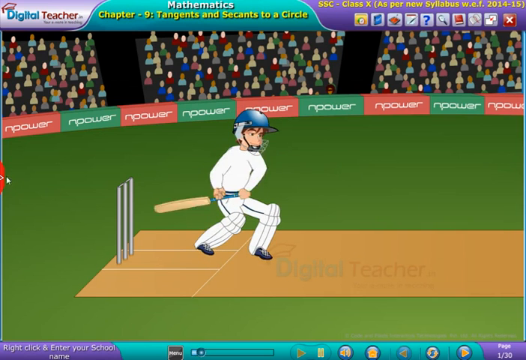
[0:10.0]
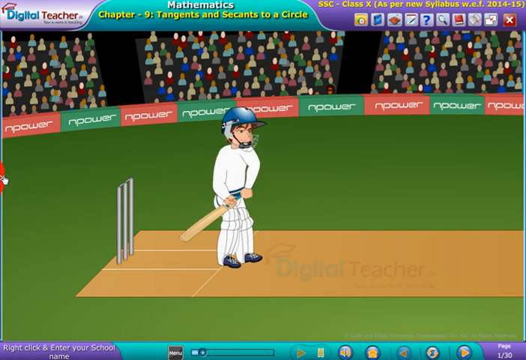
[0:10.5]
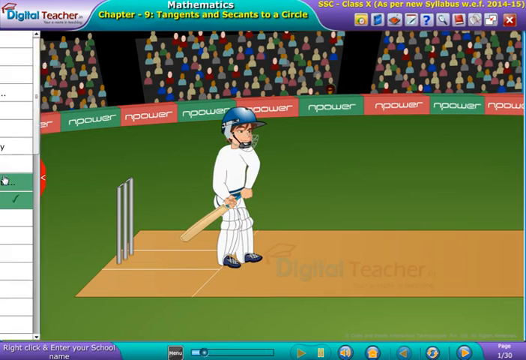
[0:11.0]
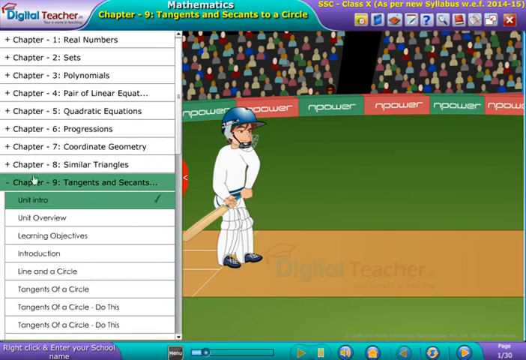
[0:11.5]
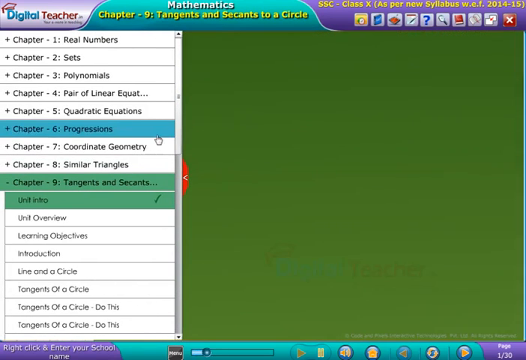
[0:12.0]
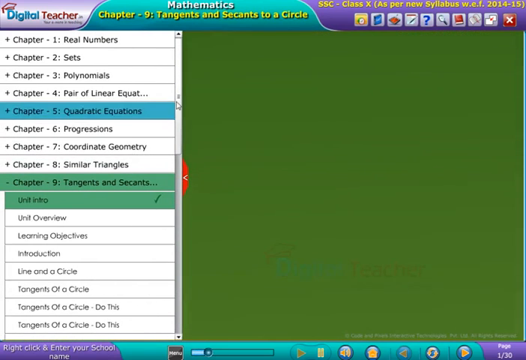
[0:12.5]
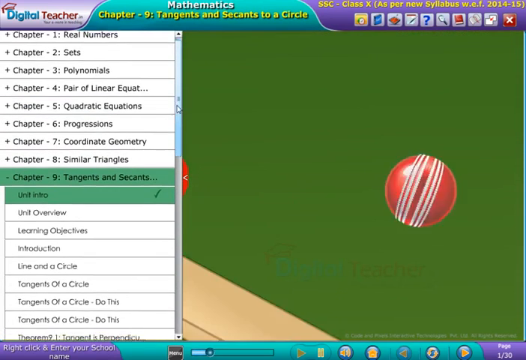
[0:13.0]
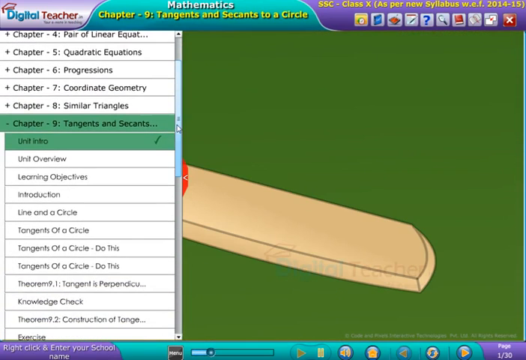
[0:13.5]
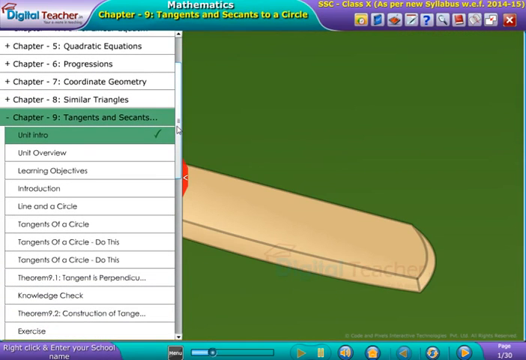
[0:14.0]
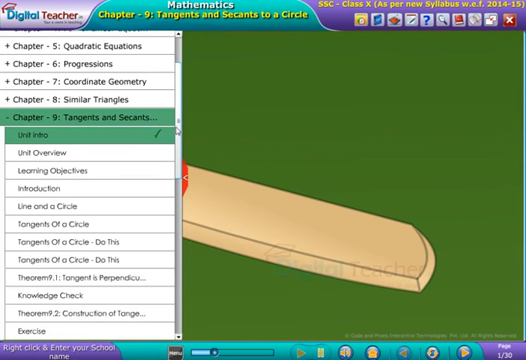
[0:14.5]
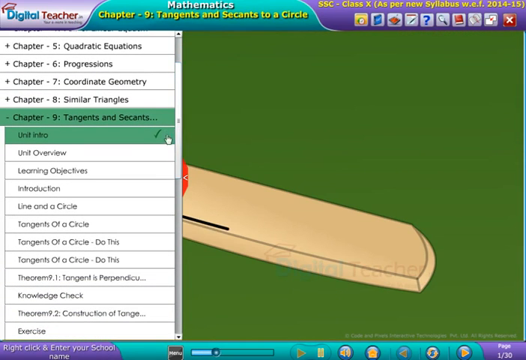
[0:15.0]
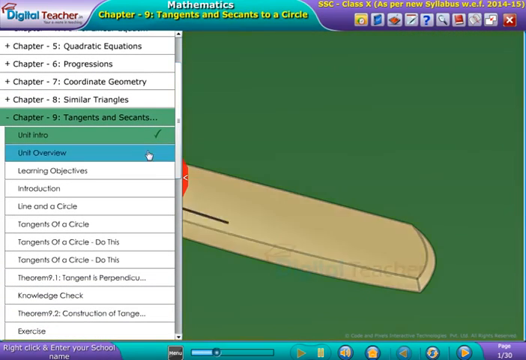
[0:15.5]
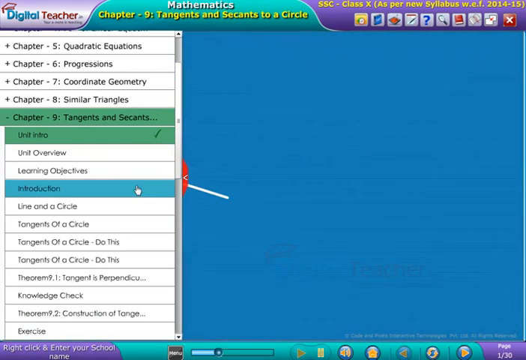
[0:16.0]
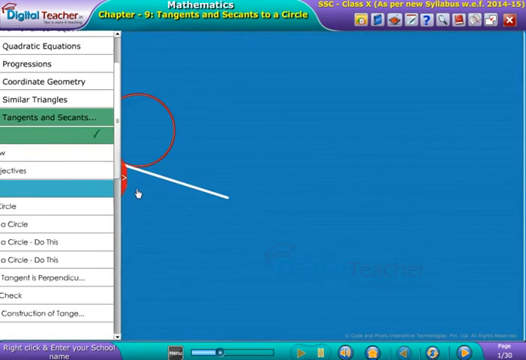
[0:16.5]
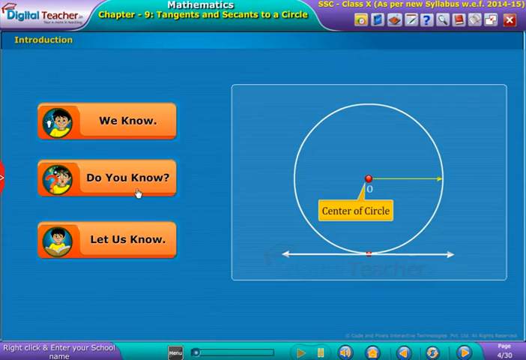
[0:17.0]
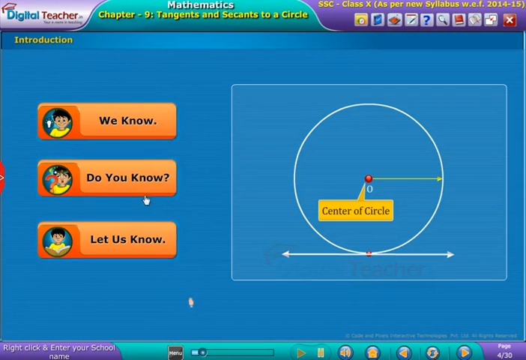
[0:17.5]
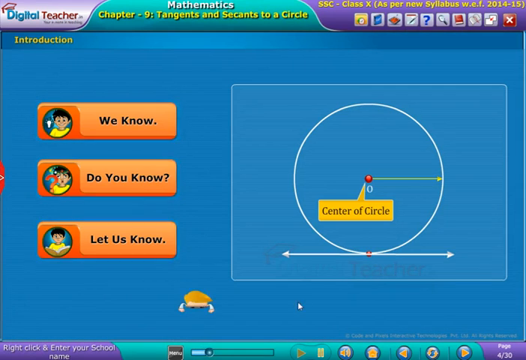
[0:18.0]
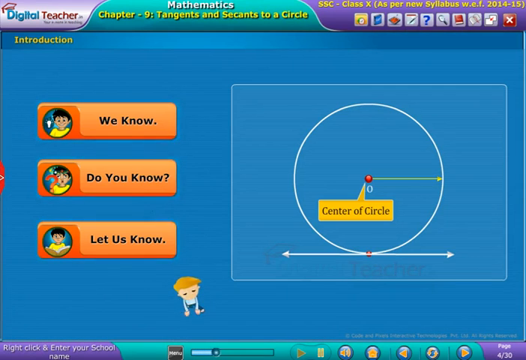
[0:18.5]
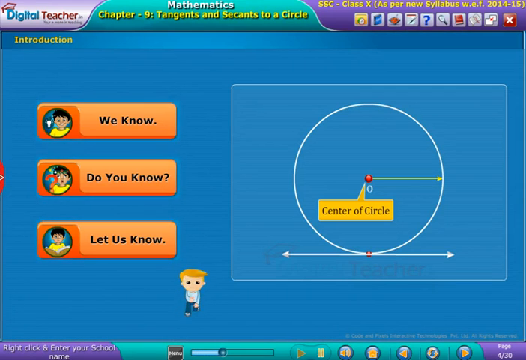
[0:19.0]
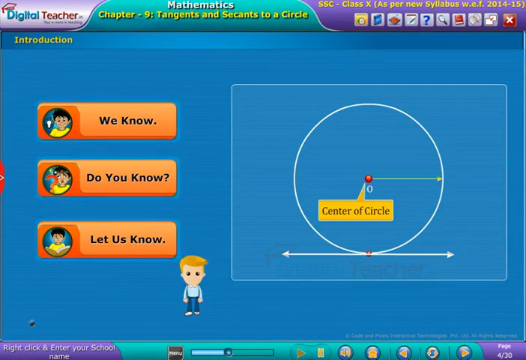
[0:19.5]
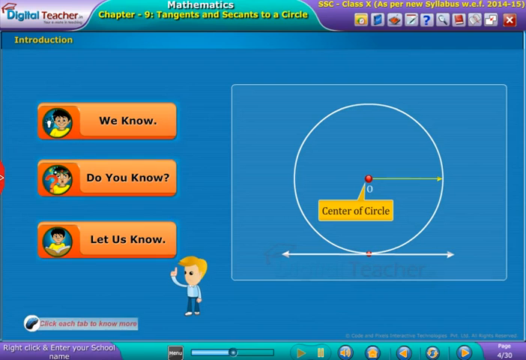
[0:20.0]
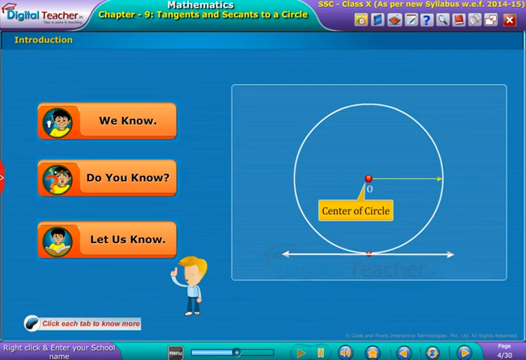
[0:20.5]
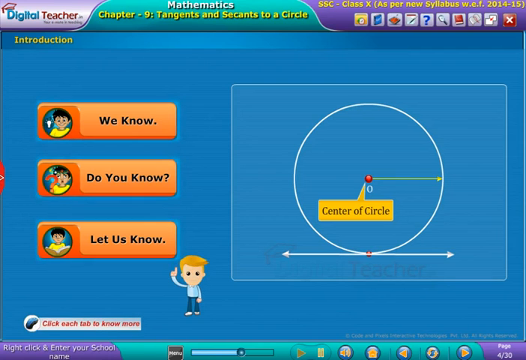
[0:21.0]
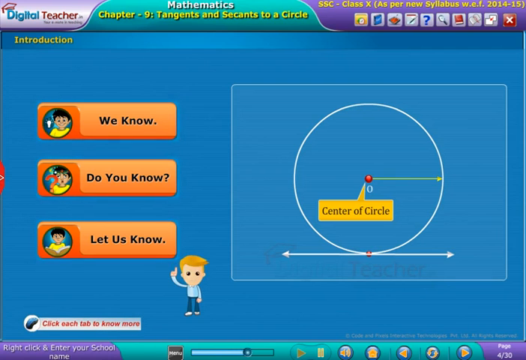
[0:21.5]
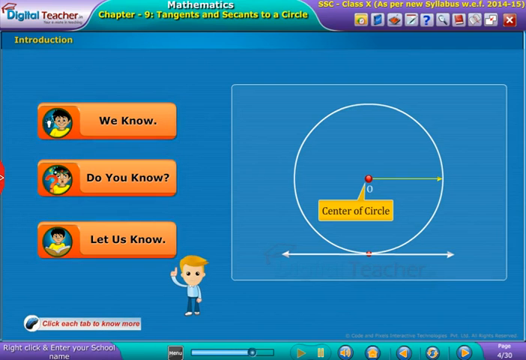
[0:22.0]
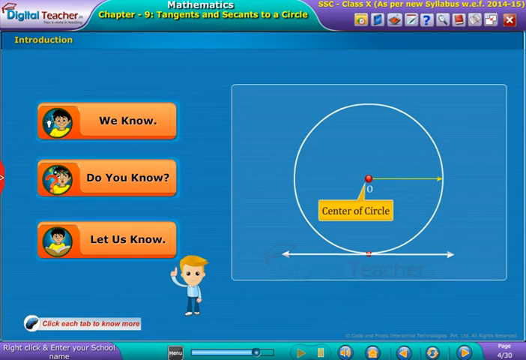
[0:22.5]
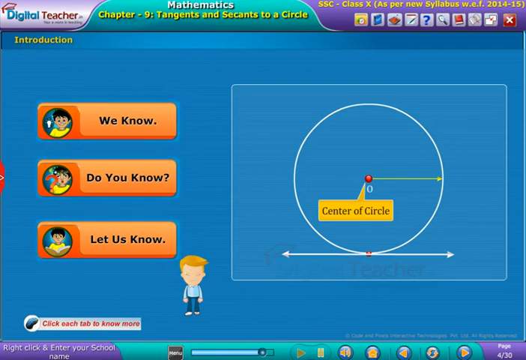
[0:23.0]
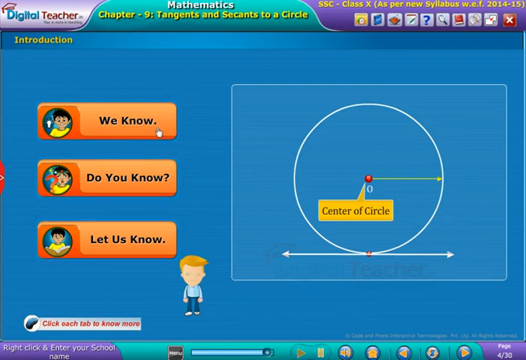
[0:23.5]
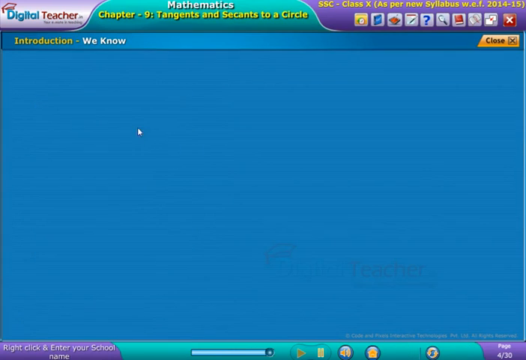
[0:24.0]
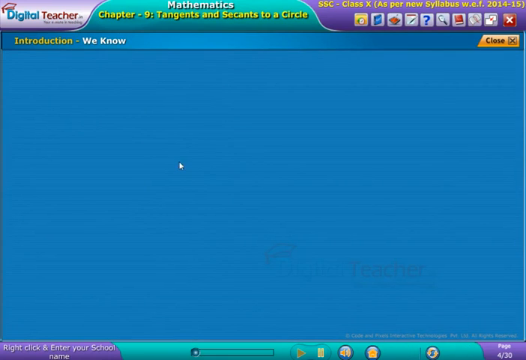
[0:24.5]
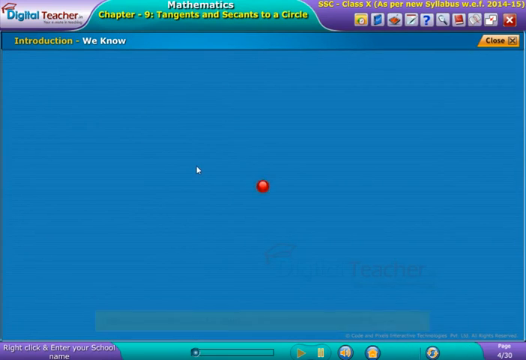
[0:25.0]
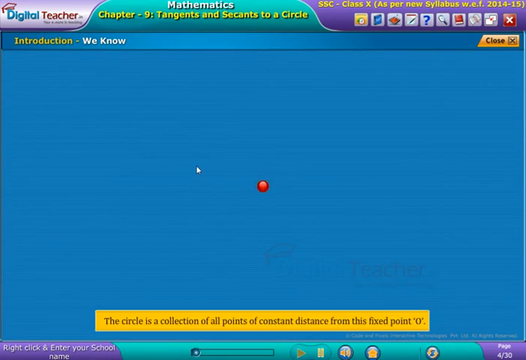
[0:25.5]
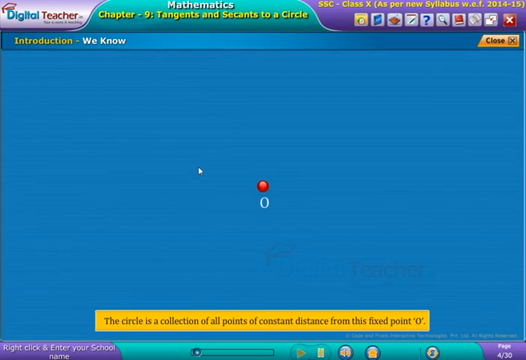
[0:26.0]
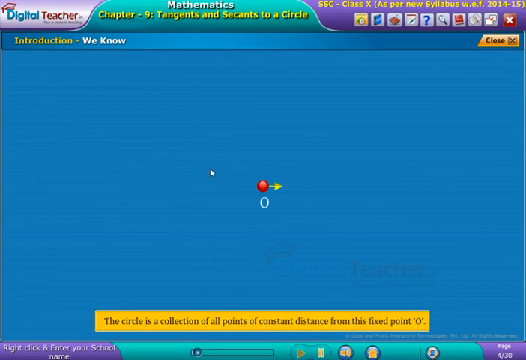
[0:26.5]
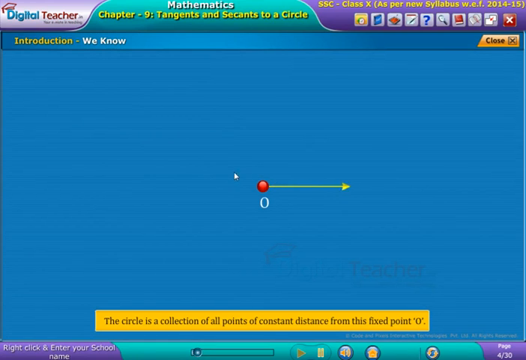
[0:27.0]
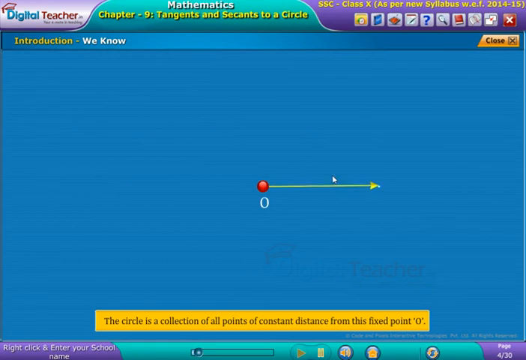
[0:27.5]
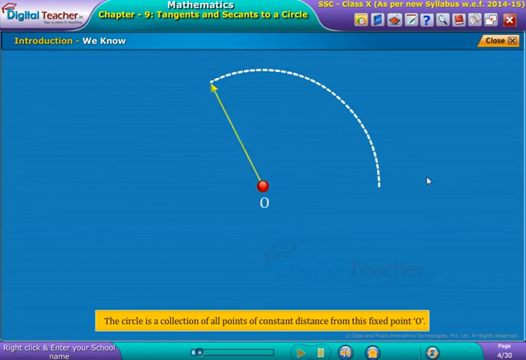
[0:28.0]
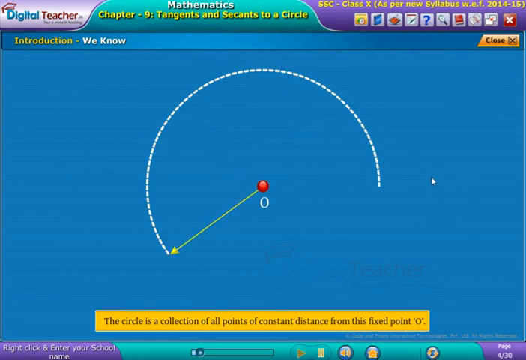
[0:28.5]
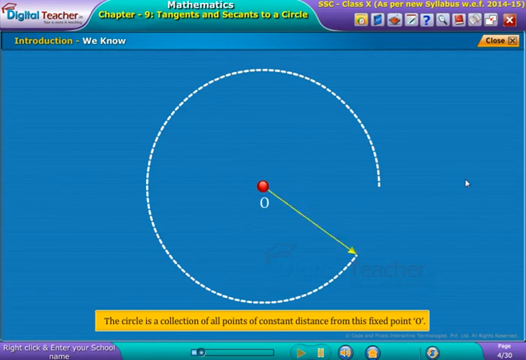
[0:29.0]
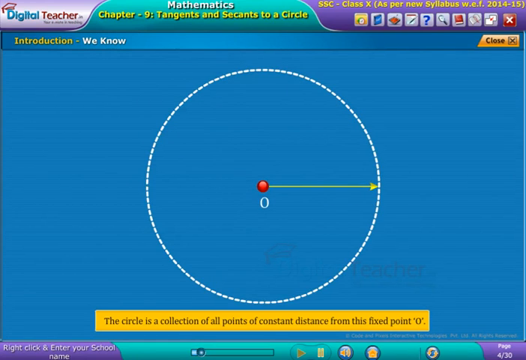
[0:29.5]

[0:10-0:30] After chapter 9, Tangents and Seconds, is selected, an animation plays, apparently an intro sequence for the chapter. A baseball player stands, getting ready to hit a ball, and the view kind of zooms in on his bat and makes a line, but the rest of the animation is not shown. A table of contents on the left allows skipping through parts of the chapter. A page then appears with three buttons: "We Know", "Do You Know", and "Let Us Know". On the right is a diagram showing the center of a circle, and an animation plays showing the center of the circle and what it is.